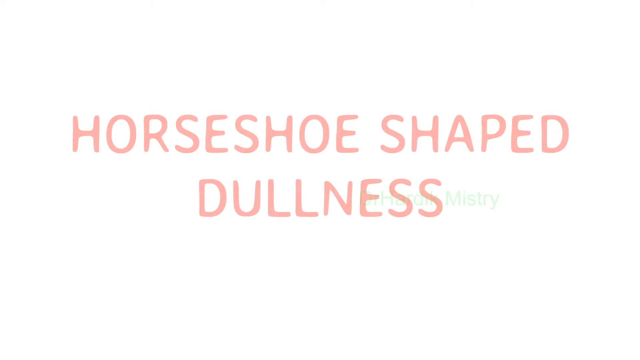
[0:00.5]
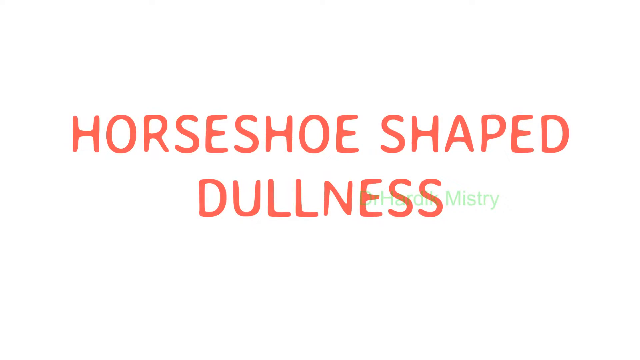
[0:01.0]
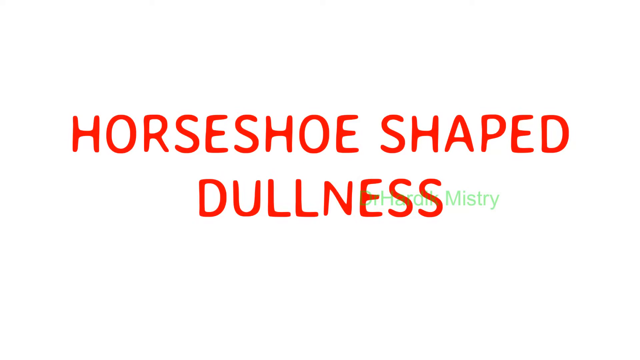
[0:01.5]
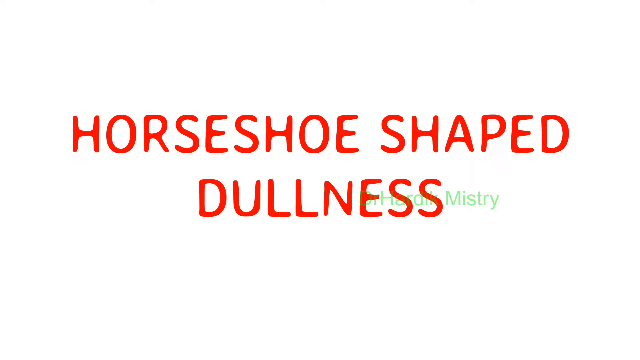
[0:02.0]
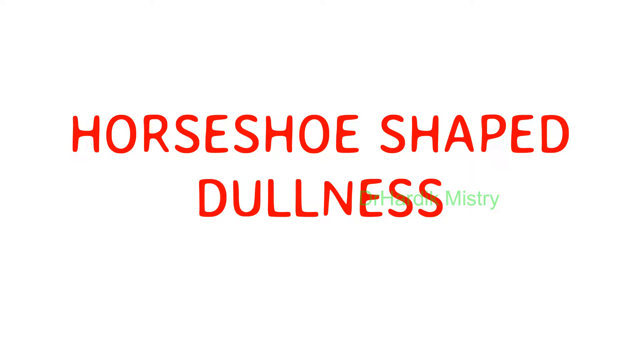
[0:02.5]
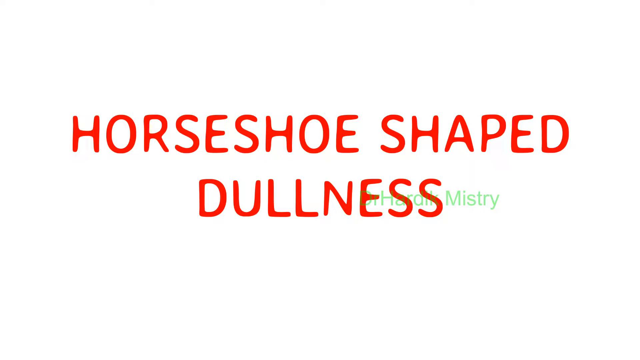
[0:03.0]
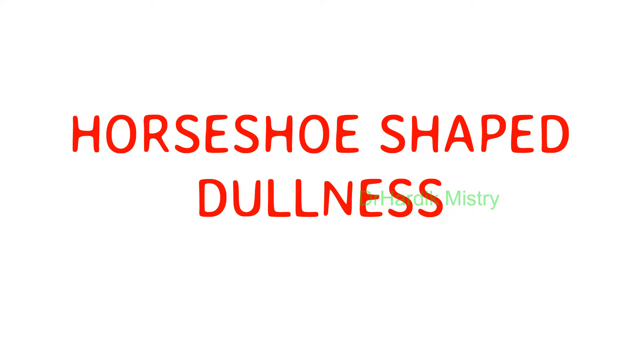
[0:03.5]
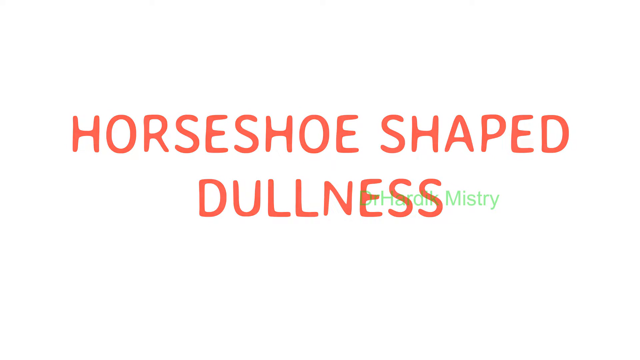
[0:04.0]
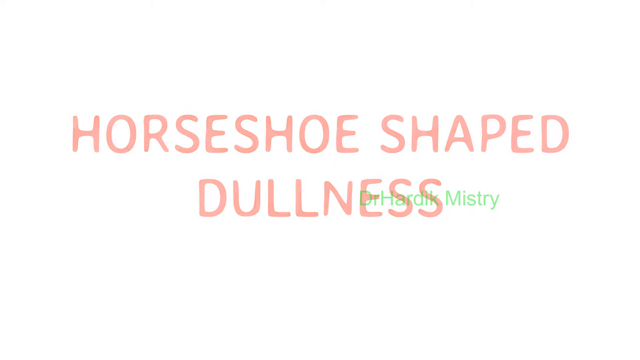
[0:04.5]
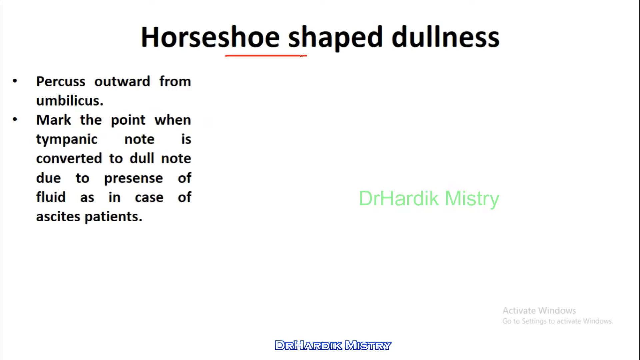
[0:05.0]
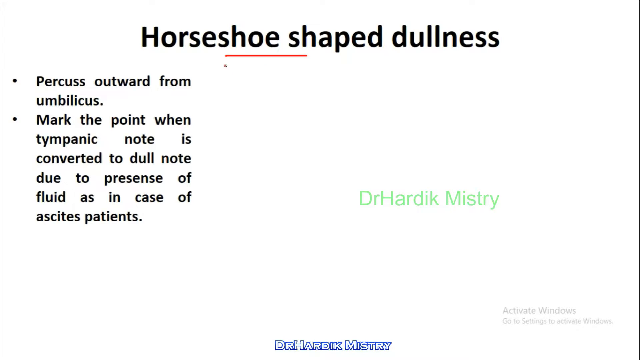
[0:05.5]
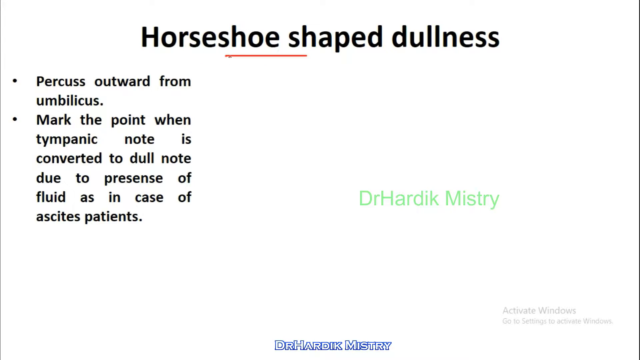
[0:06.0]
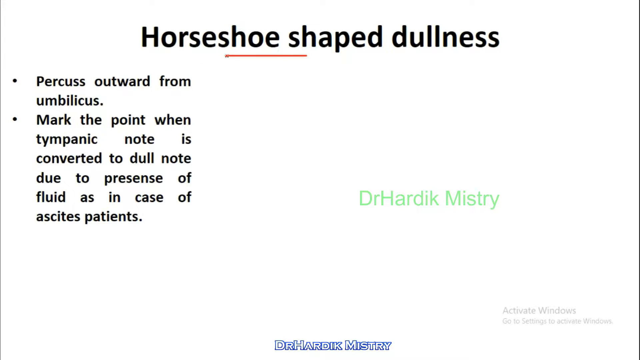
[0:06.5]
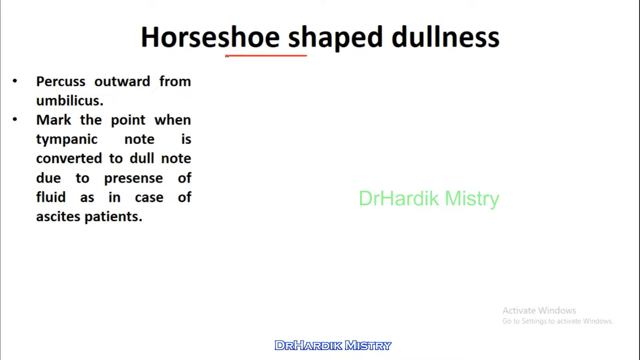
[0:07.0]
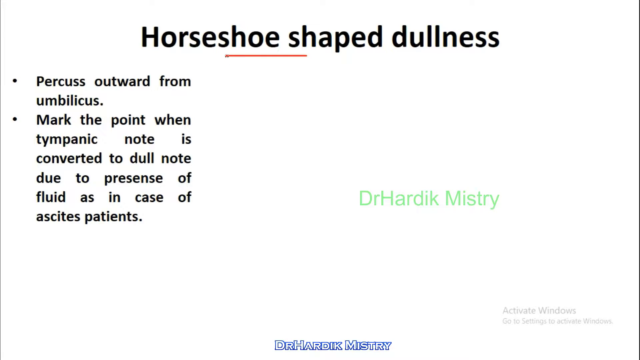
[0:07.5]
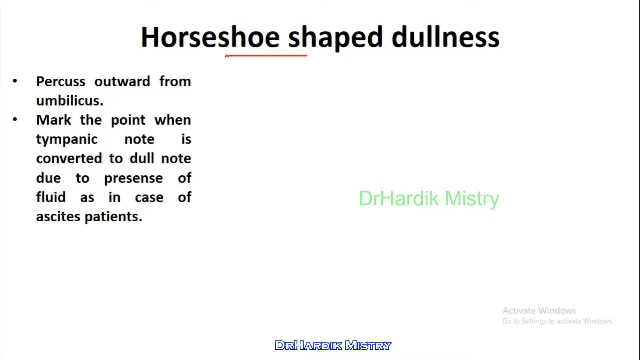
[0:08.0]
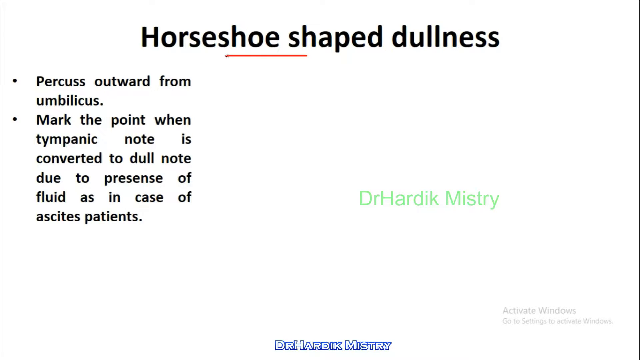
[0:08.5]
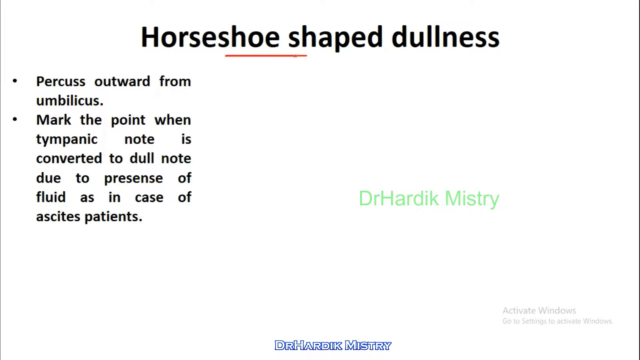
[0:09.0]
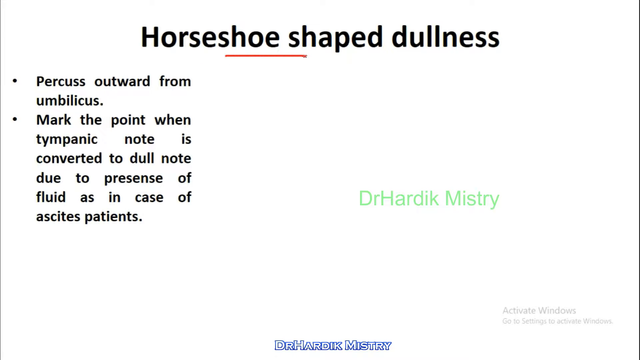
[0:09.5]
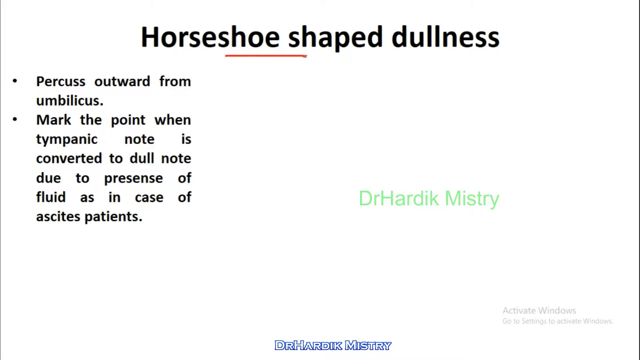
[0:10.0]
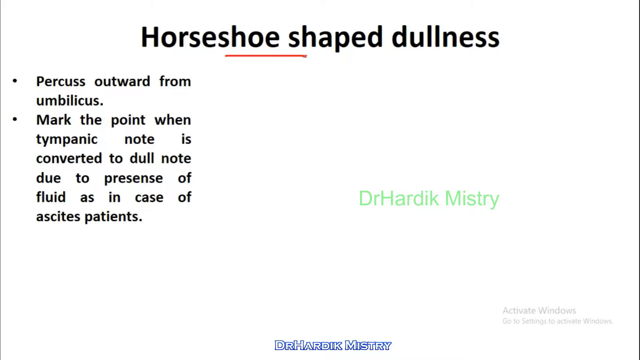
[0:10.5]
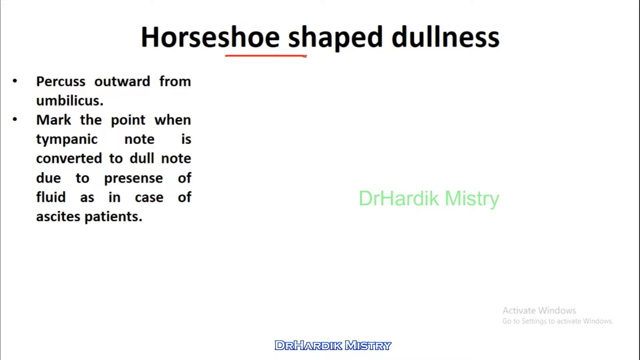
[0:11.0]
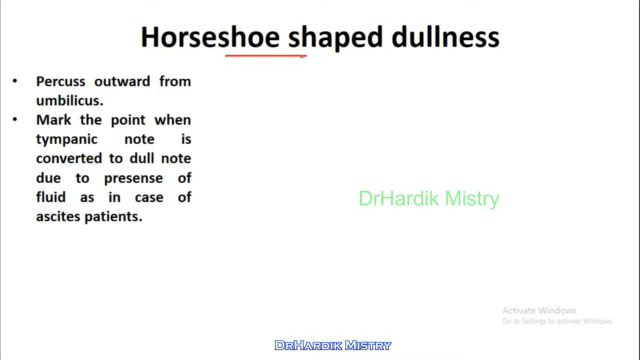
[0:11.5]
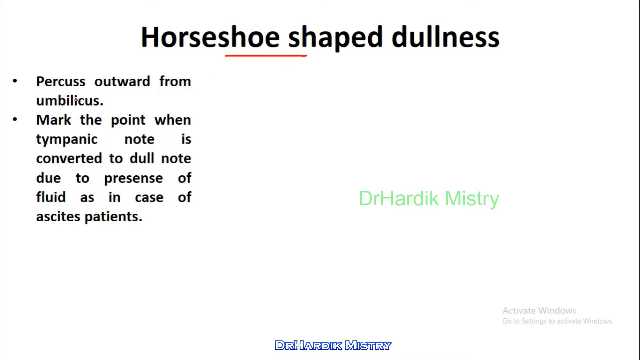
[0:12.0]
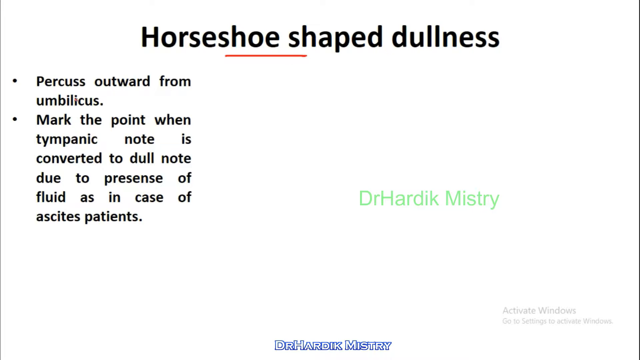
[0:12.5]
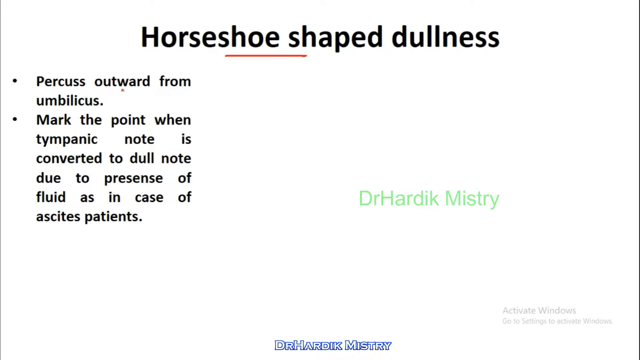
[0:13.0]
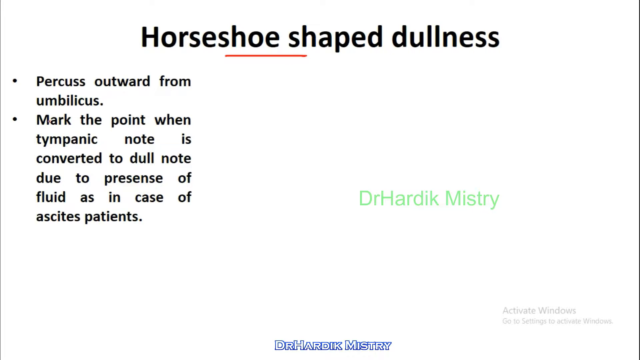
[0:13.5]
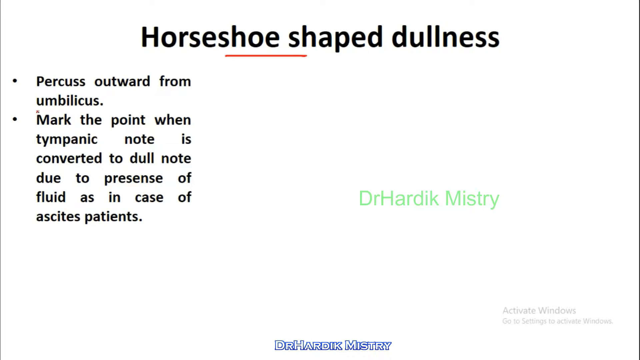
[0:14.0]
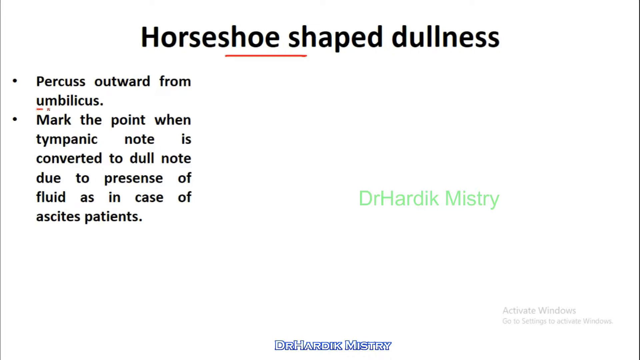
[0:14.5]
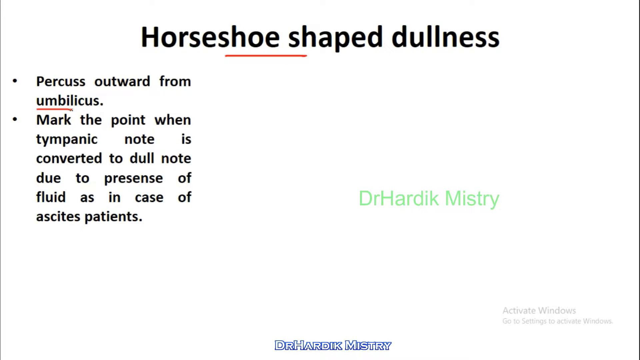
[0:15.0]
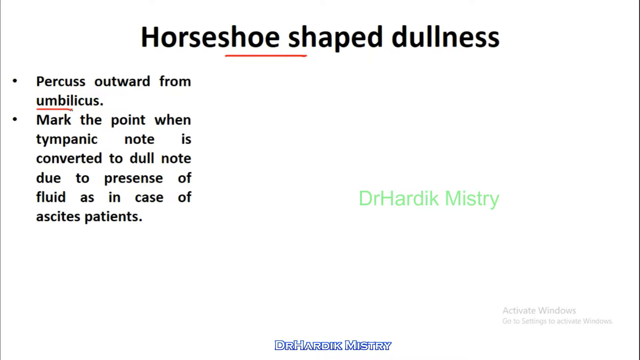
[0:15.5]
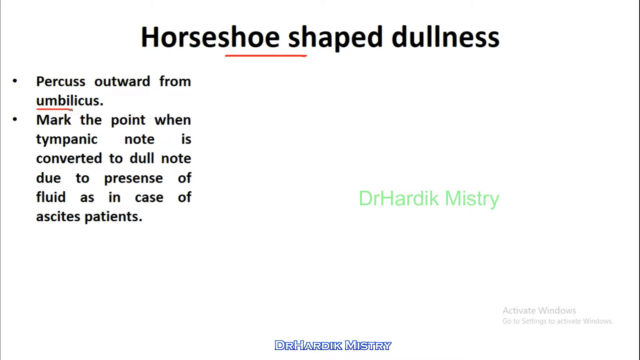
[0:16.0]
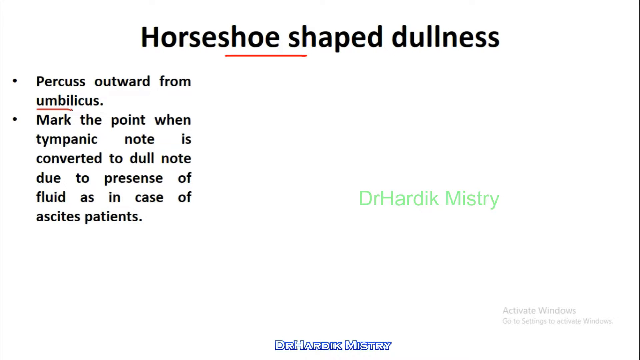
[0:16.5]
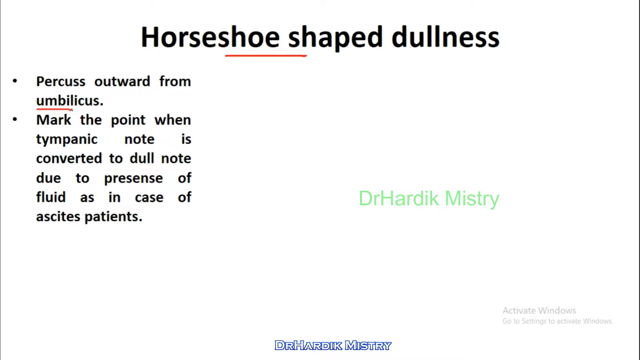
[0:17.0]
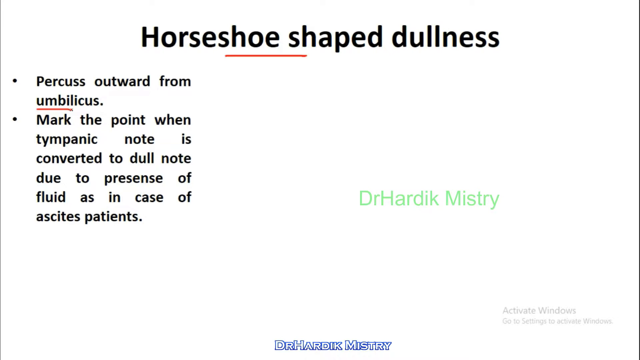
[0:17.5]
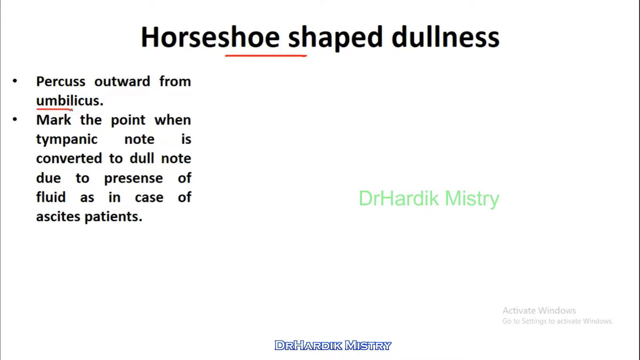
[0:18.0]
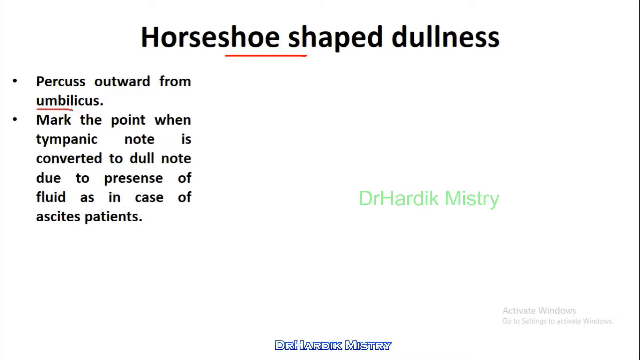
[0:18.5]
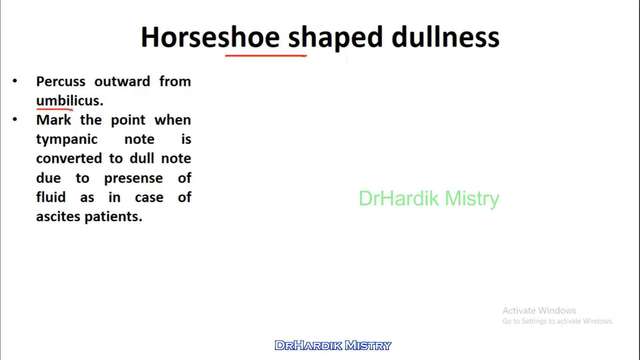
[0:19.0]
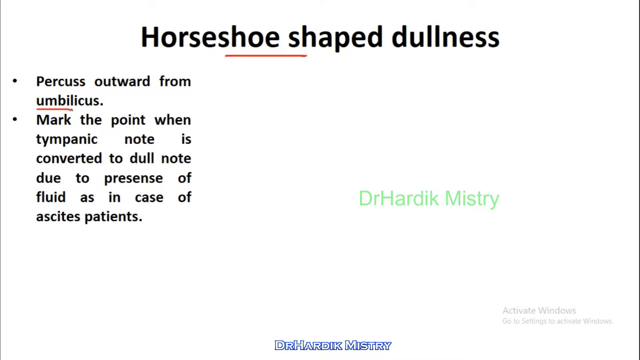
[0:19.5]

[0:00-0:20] The video opens on a screen with a white background that fades through shades of gray and black at the bottom. Across the screen, orangish-red letters read "Horseshoe-Shaped Dullness." Behind that, in green, the name "DrHardik Mistry" appears on the right-hand side about halfway down the screen, with no space between the abbreviation for Doctor and the first name Hardik. The screen then changes; it is still white with the ombre gray at the bottom. Across the top, black text reads "Horseshoe Shaped Dullness," with a short red line under it. On the left-hand side are two bullet points. The first reads "Percuss Outward from Umbilicus." The second reads "Mark the Point when Tympanic Note is converted to Dull Note due to the presence of fluid as in the case of ascites patients." Centered at the bottom of the screen, in blue-outlined letters, is the name "DrHardik Mistry."